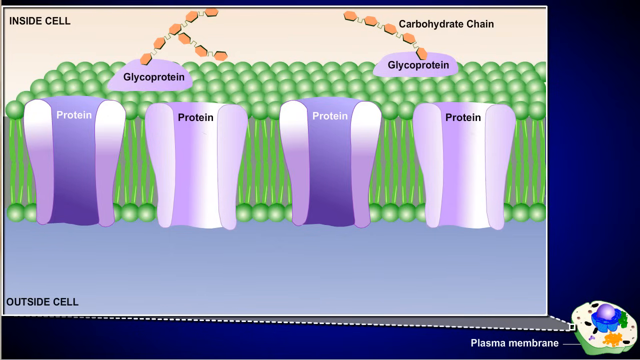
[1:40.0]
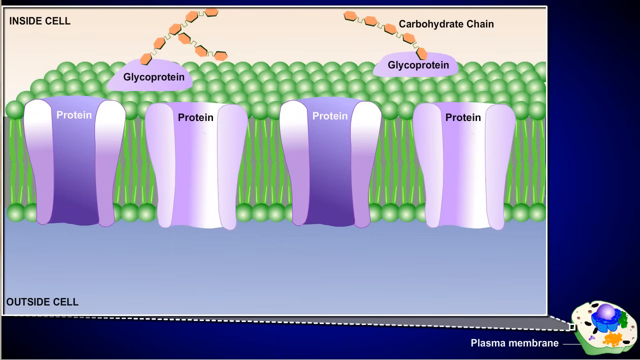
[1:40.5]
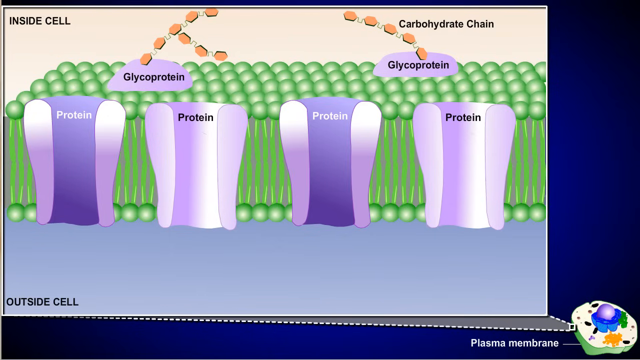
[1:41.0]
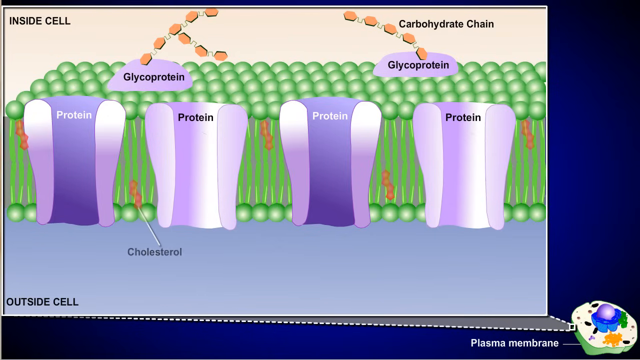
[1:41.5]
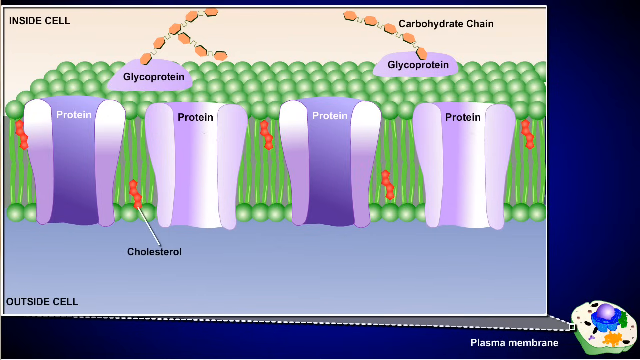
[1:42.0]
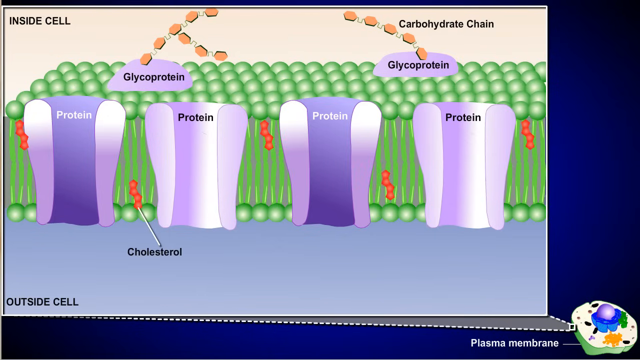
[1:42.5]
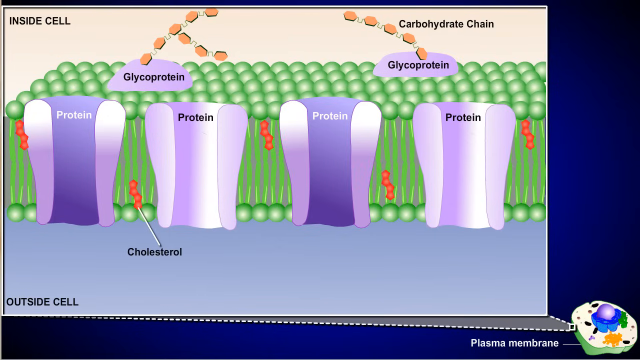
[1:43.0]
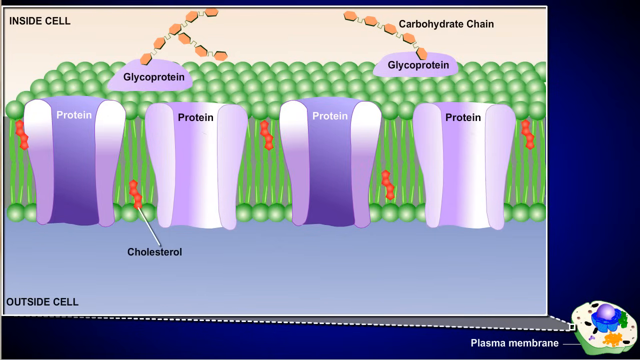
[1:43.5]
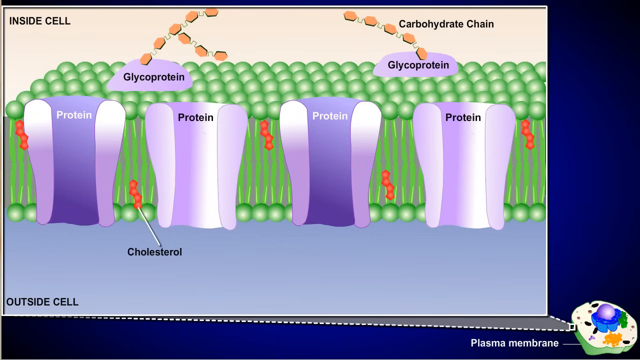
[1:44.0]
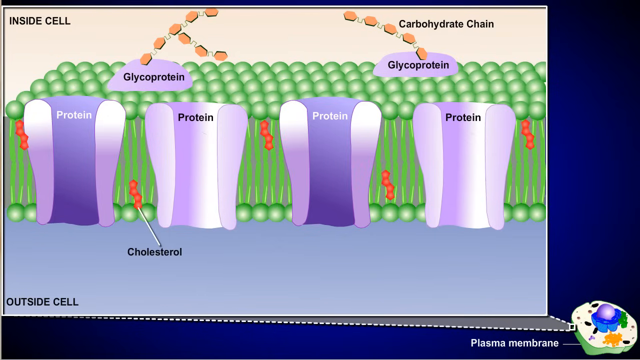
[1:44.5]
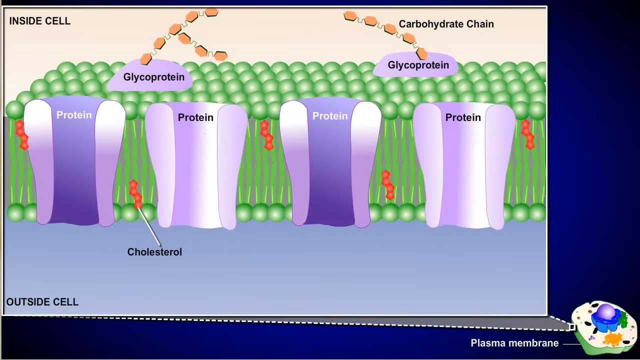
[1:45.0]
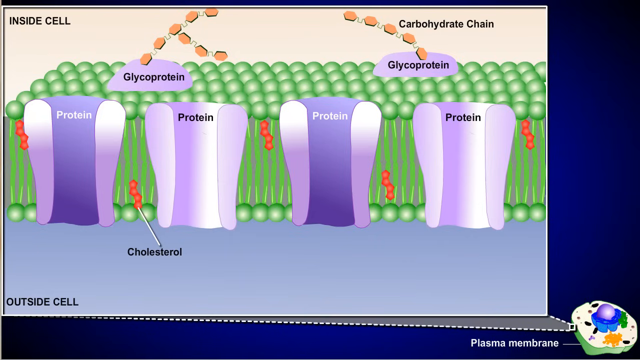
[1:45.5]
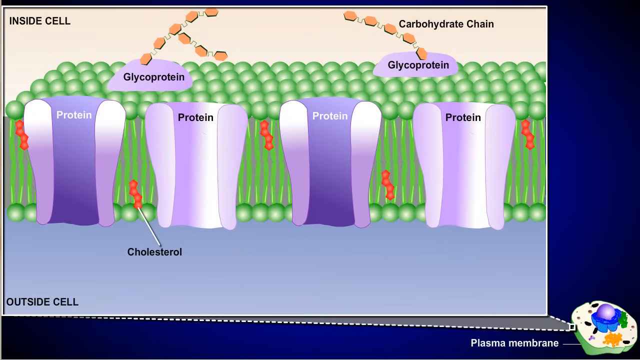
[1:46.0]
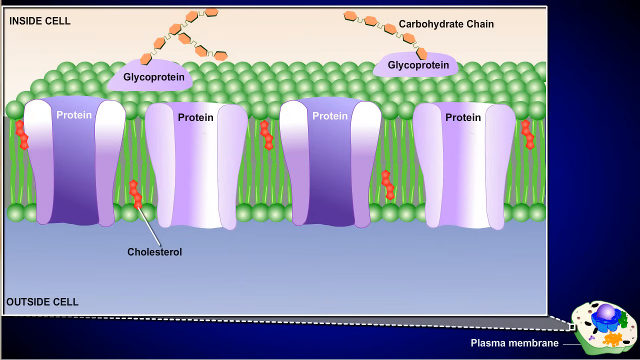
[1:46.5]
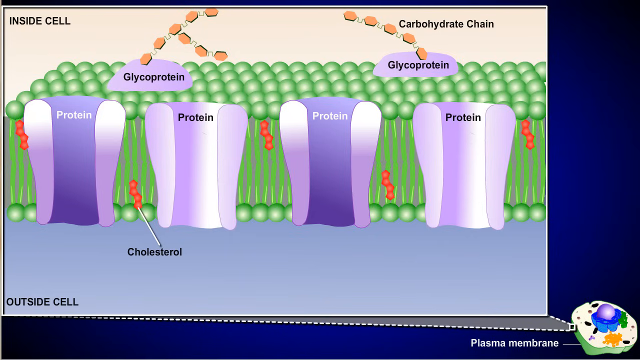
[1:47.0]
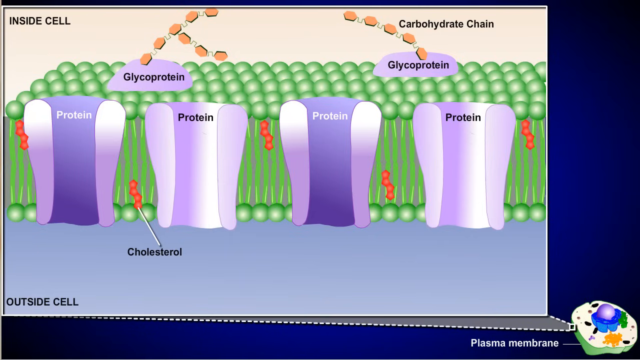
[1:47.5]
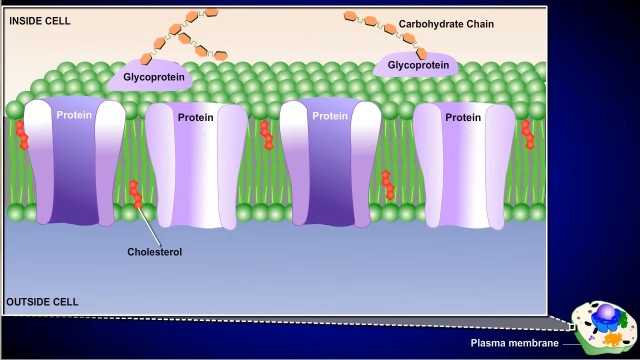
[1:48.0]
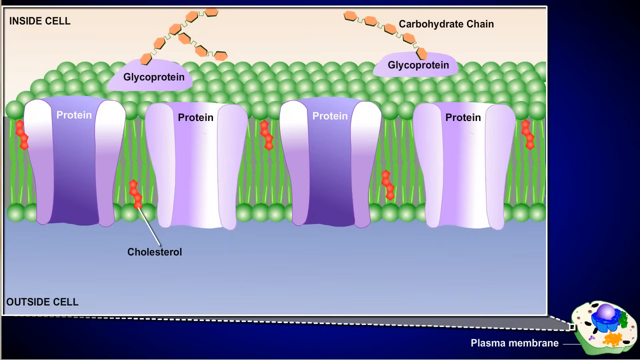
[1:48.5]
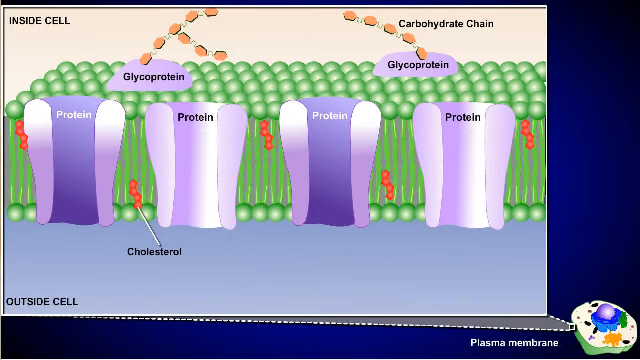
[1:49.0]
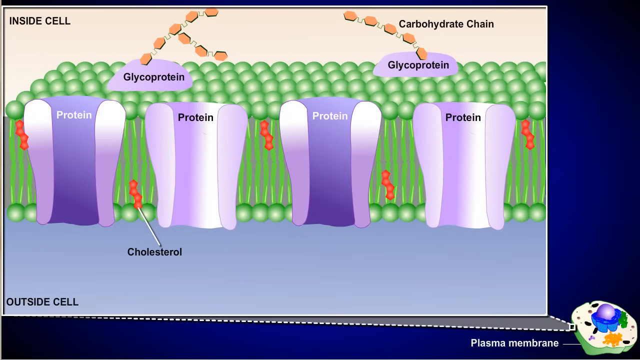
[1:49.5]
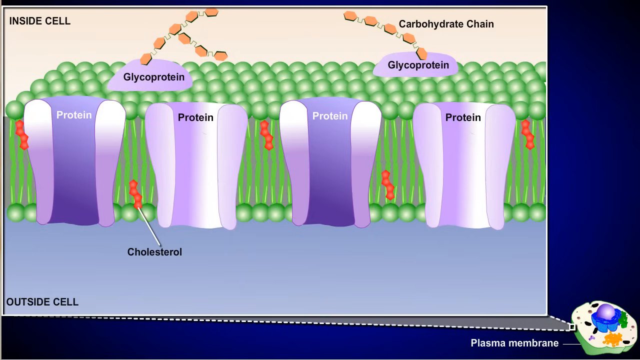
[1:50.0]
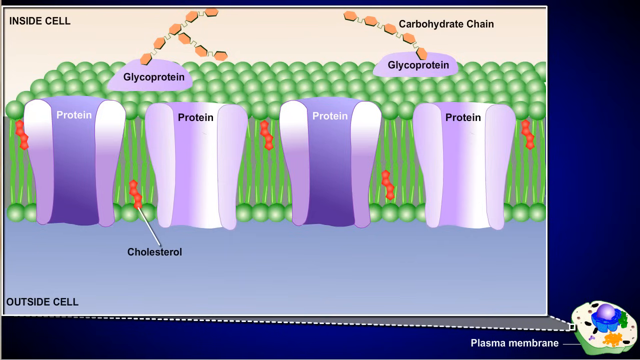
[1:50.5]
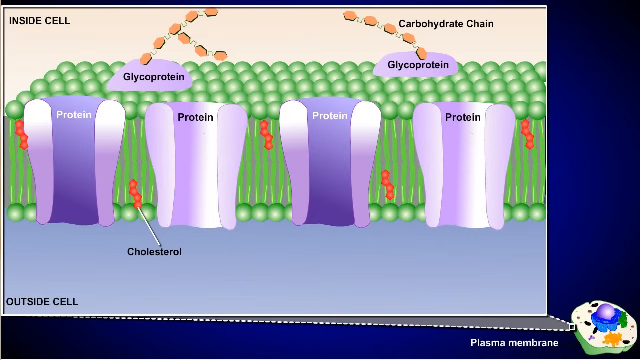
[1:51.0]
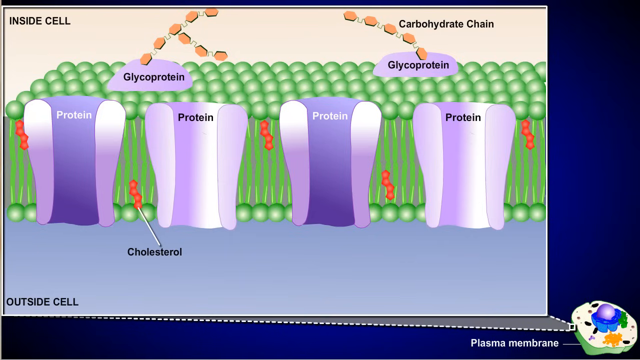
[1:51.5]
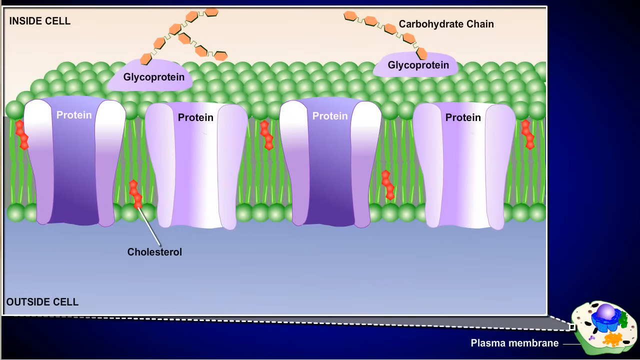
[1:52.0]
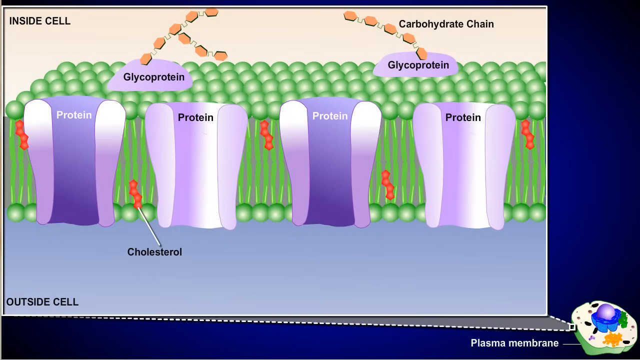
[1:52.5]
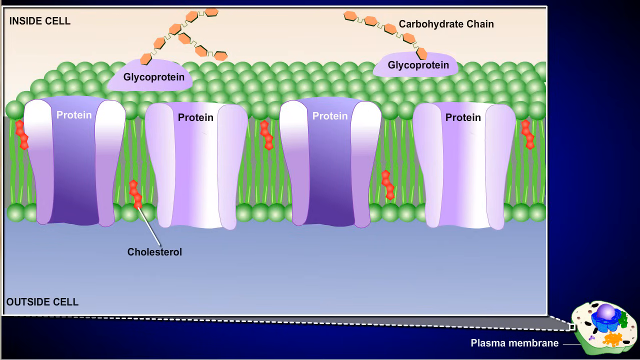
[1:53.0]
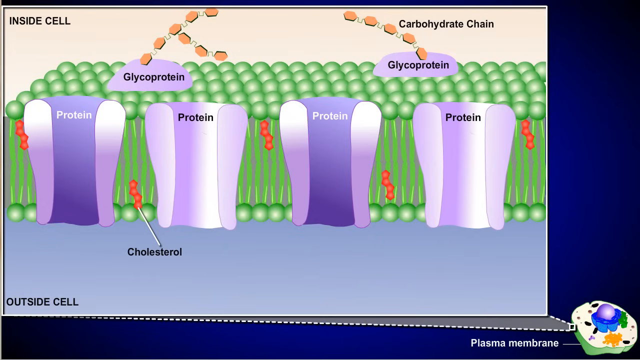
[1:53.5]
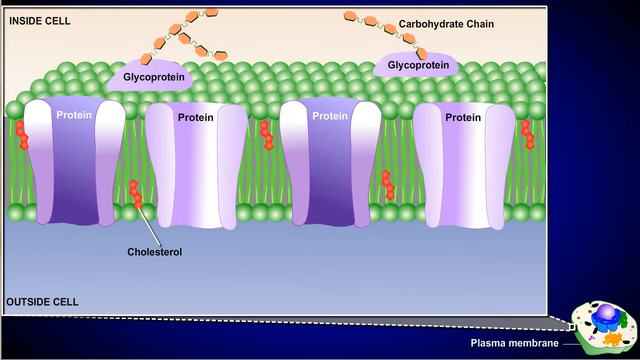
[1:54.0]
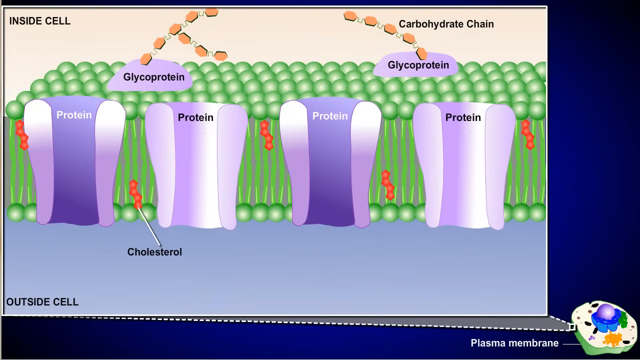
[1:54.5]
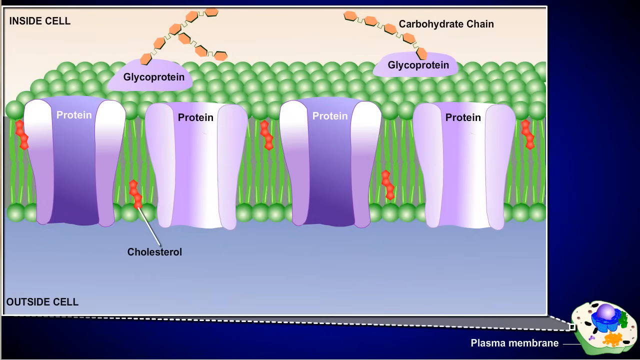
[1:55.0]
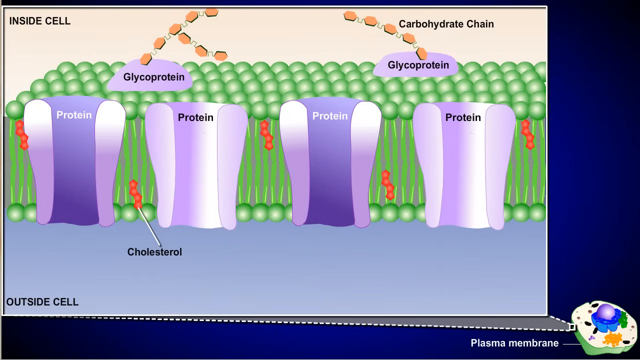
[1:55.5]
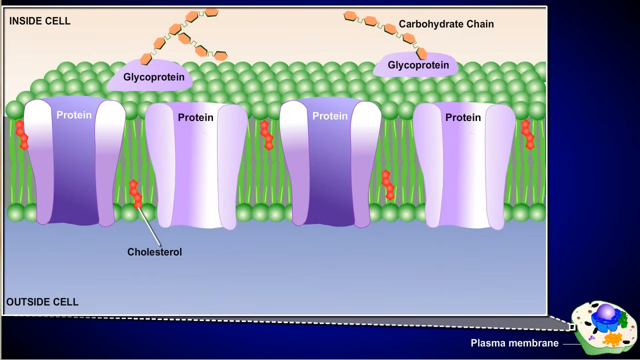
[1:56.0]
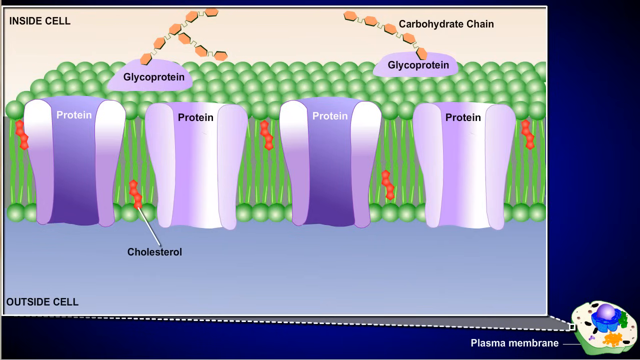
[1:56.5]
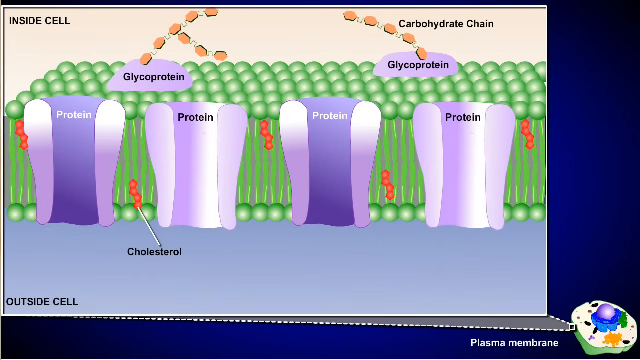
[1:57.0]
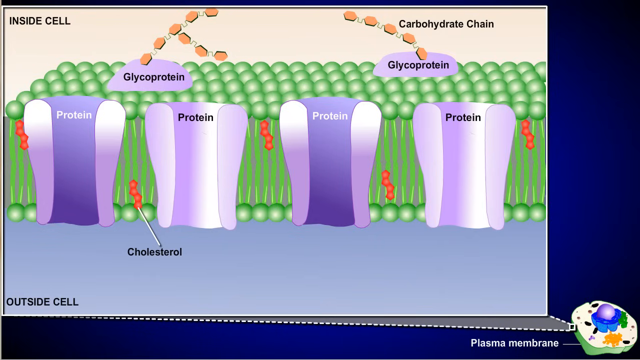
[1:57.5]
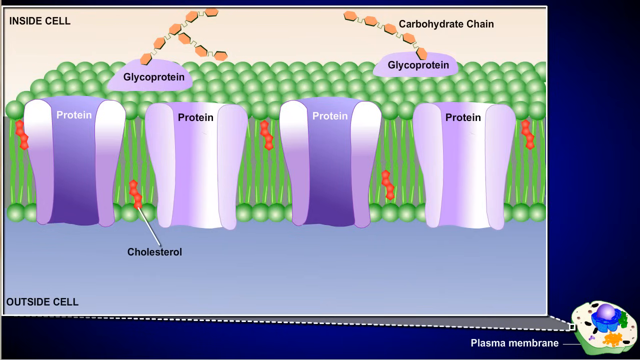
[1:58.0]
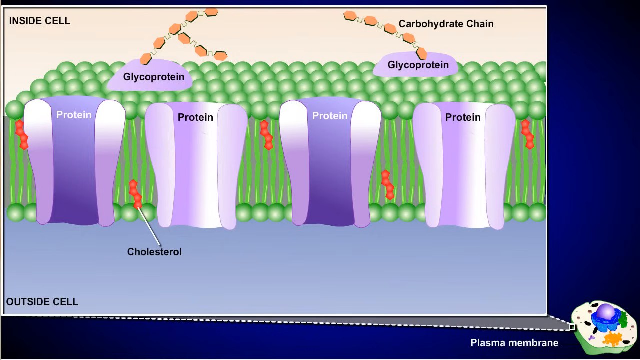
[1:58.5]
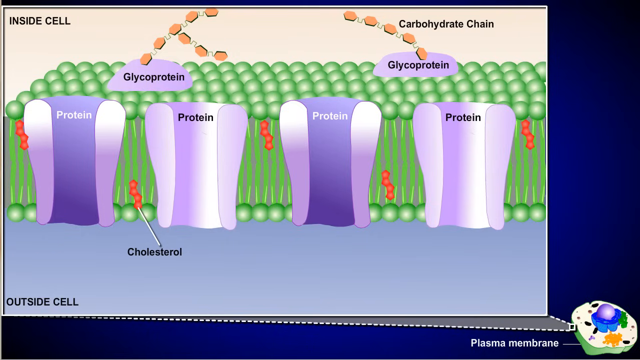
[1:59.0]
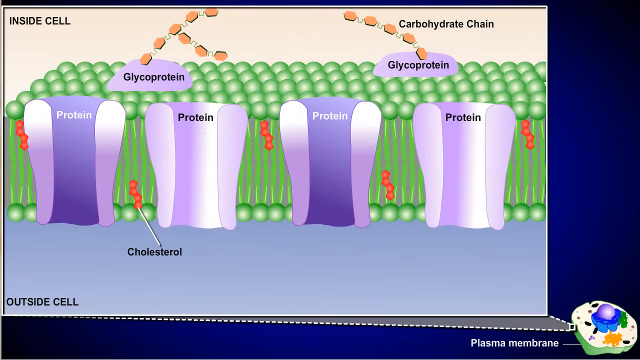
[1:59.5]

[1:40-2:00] On a blue background, a white frame in the center has a beige background with black lettering at the top left saying "inside cell." Five rows of green circles run from left to right, attached by green stems, with another row of green circles at the bottom. The bottom portion is gray, with black lettering at the bottom left reading "outside cell." At the top right, black lettering says "carbohydrate chain." The purple half circles on the left and right of the green circles say "glycoprotein." Orange jagged squares run from the center towards the middle of the page. Dark and light purple rounded-edged pieces at the front say "protein," in white on the first, black on the second, white on the third, and black on the far right. At the far right, a white dotted line with gray edging is underneath the white box, with white lettering underneath saying "plasma membrane." There is a purple rounded circle in the middle with a blue wall around it, green stems to the right, orange stems at the bottom center, brown dots around it, green on the bottom end, and light white on top. Orange jagged edges appear in between the protein pieces. The second one from the left has a white line attached to it, with black lettering at the bottom saying "cholesterol."